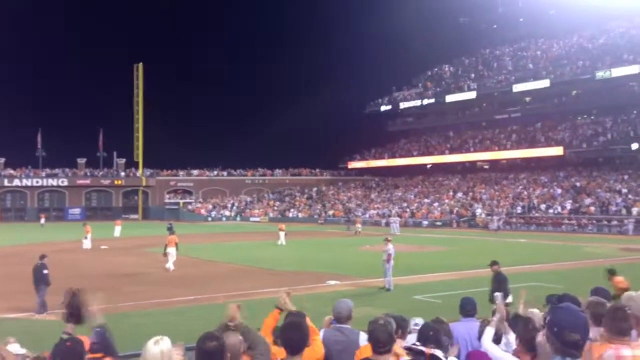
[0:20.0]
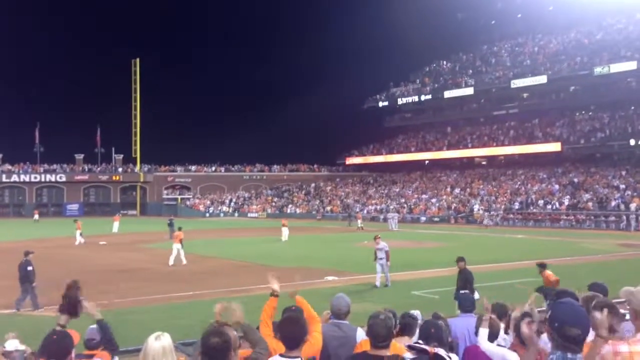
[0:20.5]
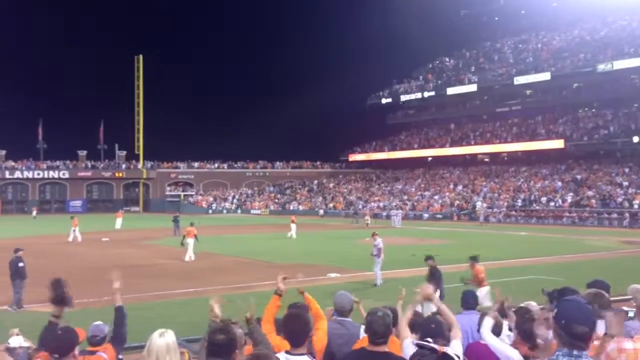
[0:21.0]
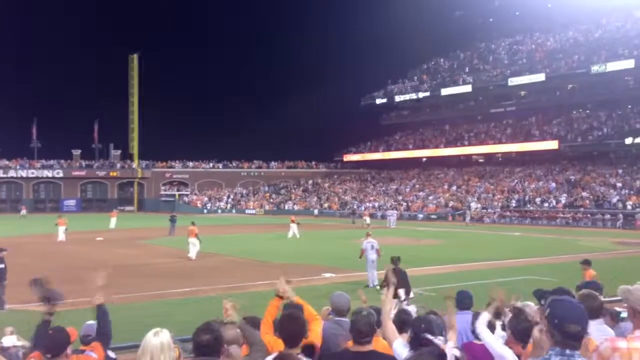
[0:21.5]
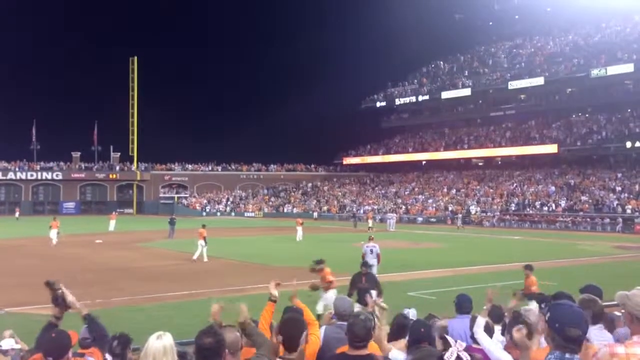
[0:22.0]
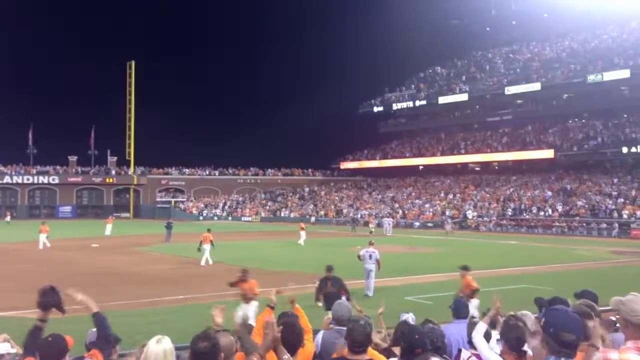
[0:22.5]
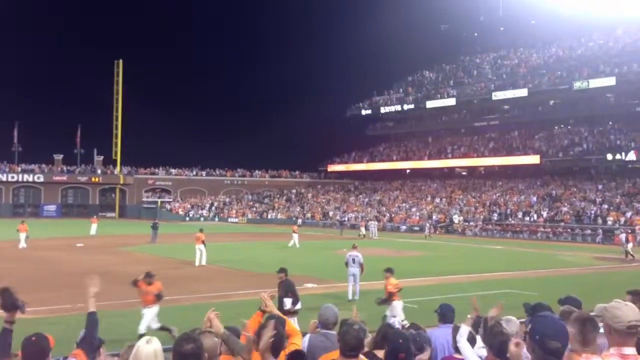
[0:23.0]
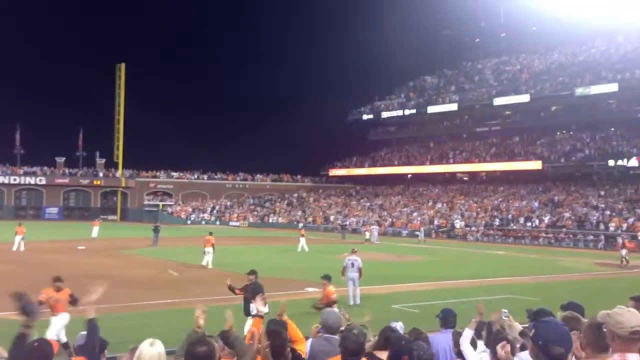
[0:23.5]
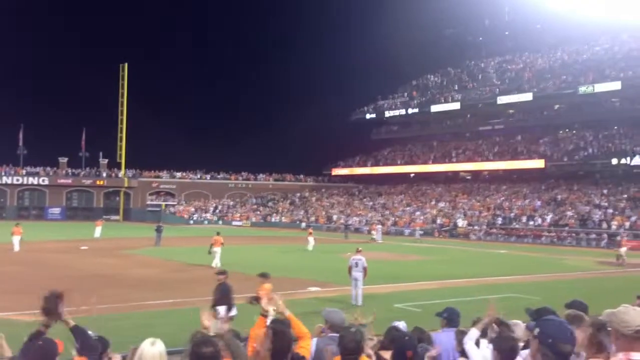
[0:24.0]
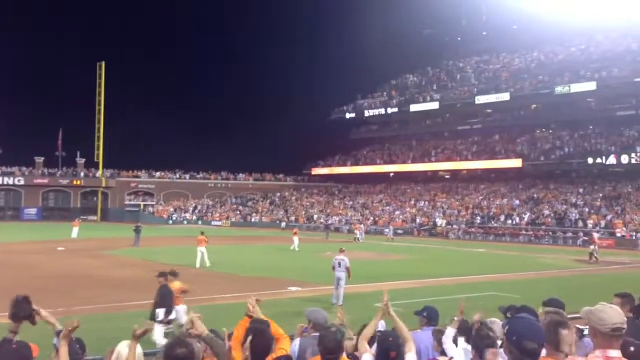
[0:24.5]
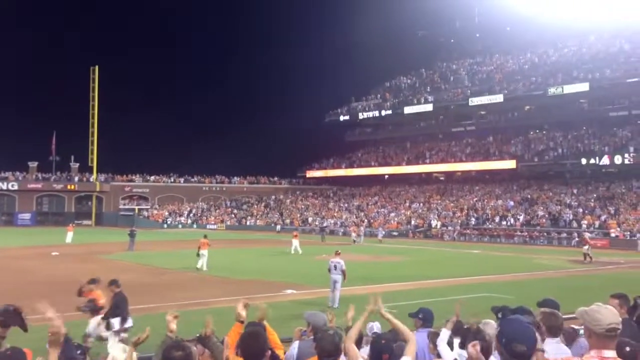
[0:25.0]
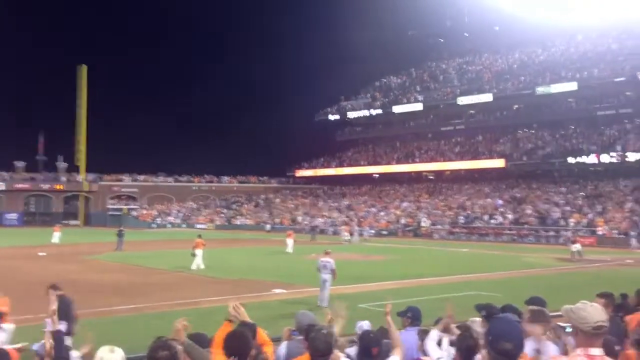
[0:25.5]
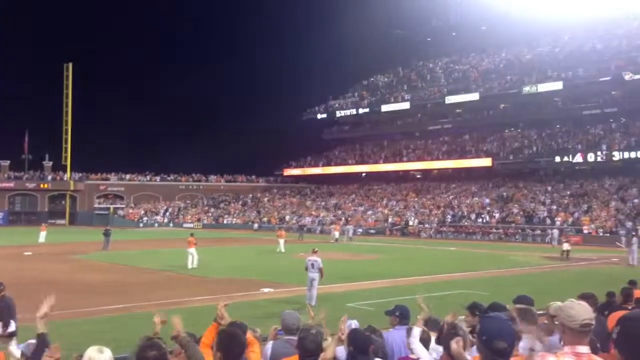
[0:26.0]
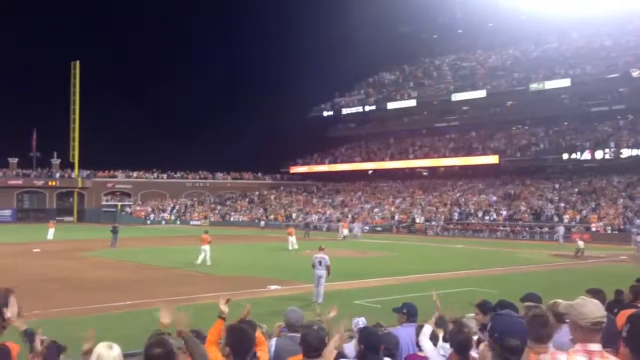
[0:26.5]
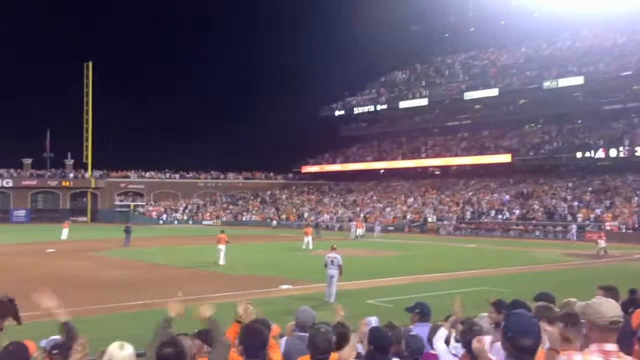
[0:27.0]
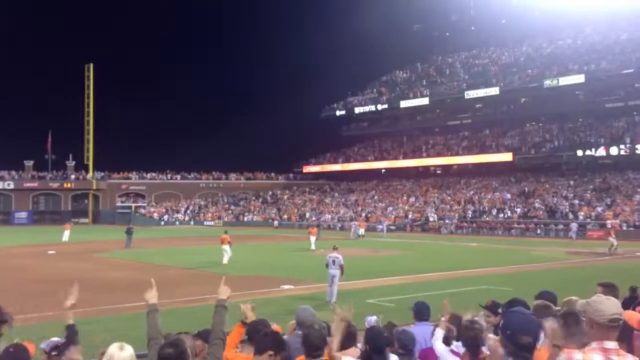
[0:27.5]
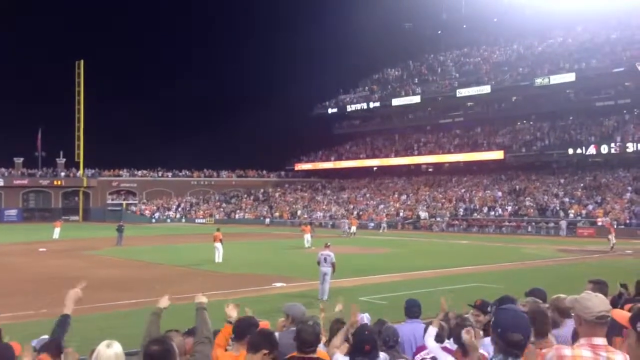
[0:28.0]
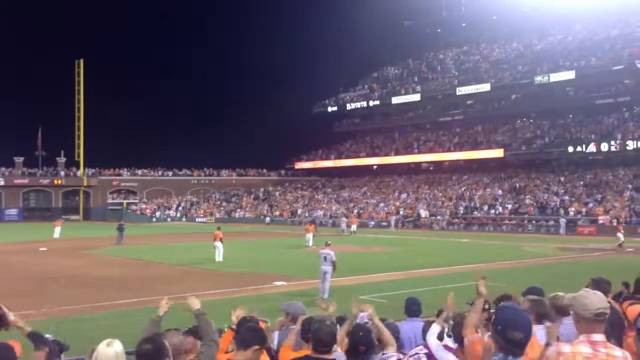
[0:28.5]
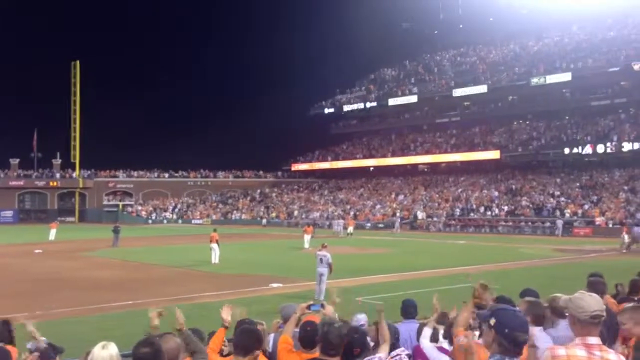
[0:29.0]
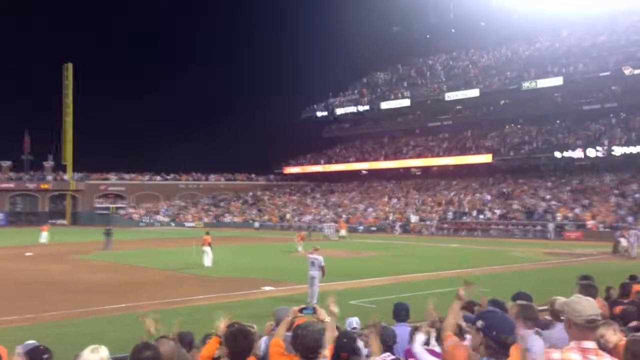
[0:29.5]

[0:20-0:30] People in the crowd wearing orange celebrate with their hands in the air. There is little action on the field: no one is pitching or running, and players just walk around a little. The team in orange seems to be fielding, while the team in white is batting. A new batsman apparently comes up to the plate. The camera covers most of the diamond, and the spot where the batsman stands is toward the right-hand side of the view, sometimes off-screen and sometimes in the middle.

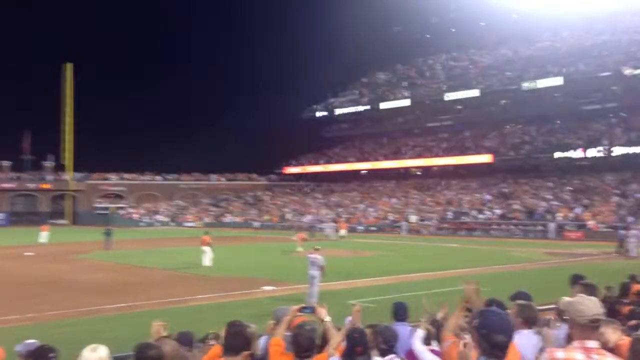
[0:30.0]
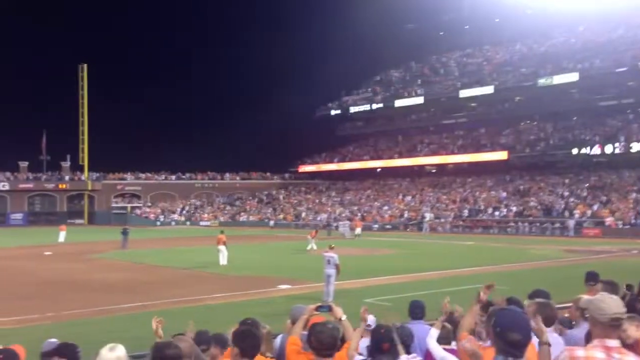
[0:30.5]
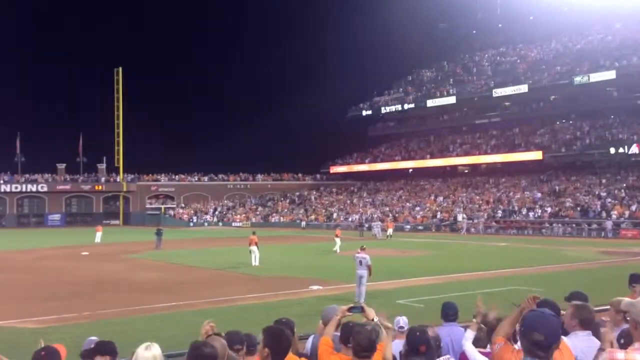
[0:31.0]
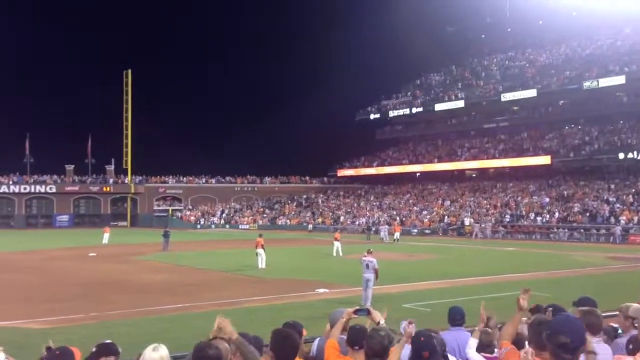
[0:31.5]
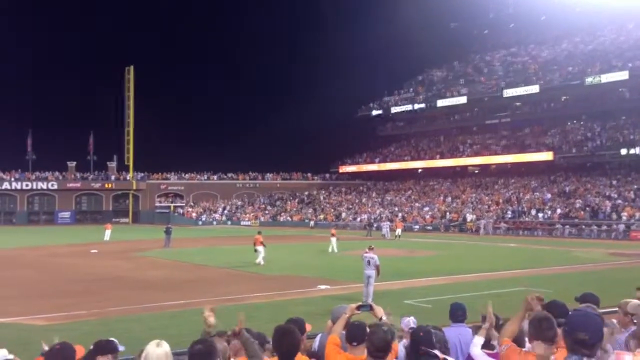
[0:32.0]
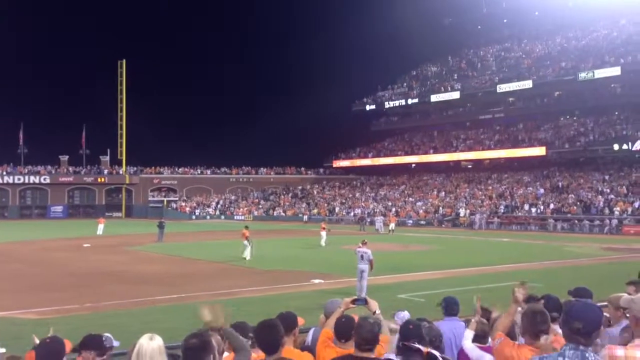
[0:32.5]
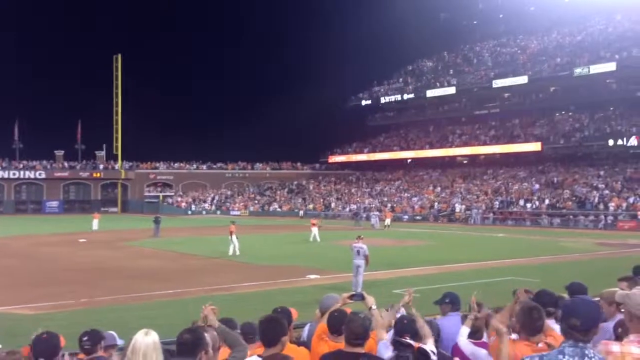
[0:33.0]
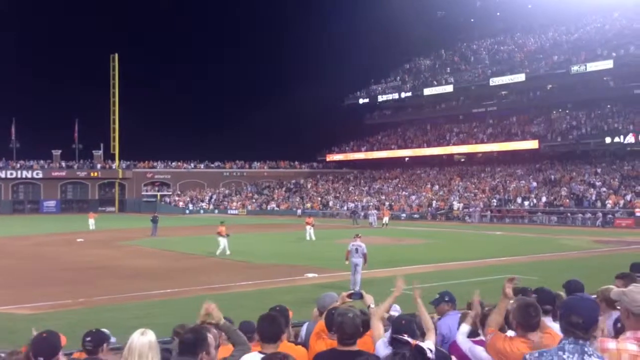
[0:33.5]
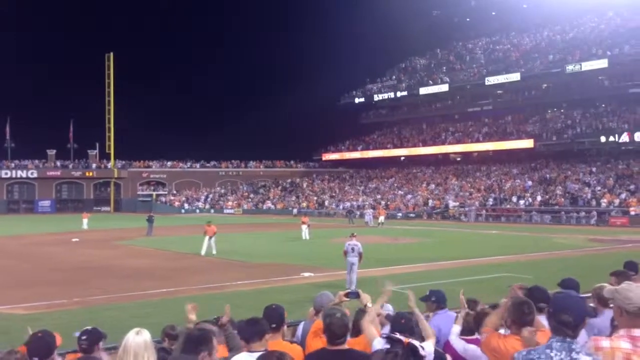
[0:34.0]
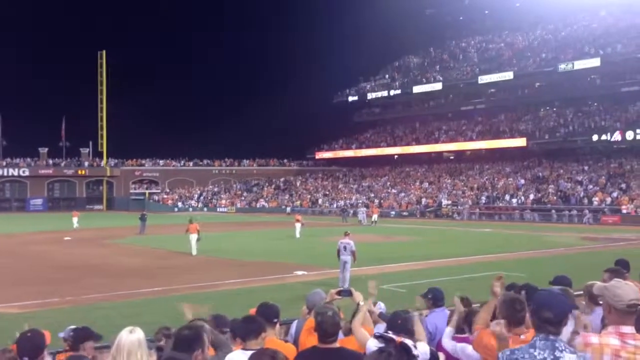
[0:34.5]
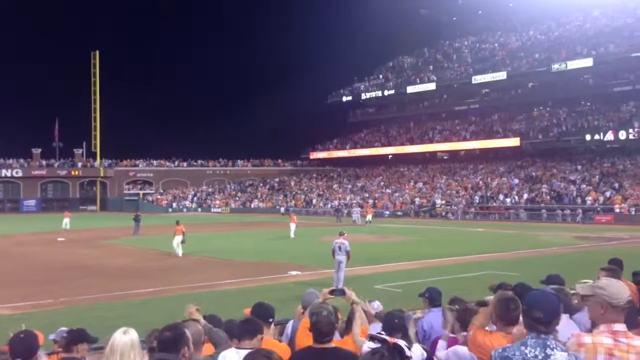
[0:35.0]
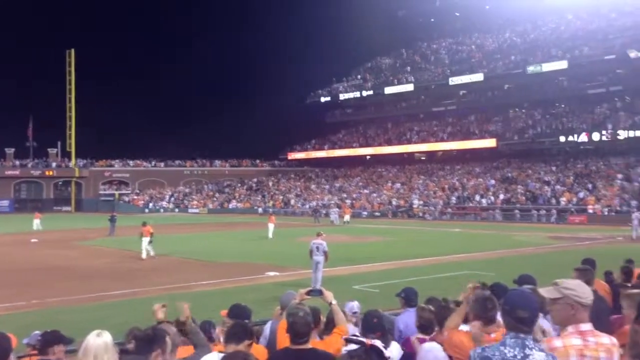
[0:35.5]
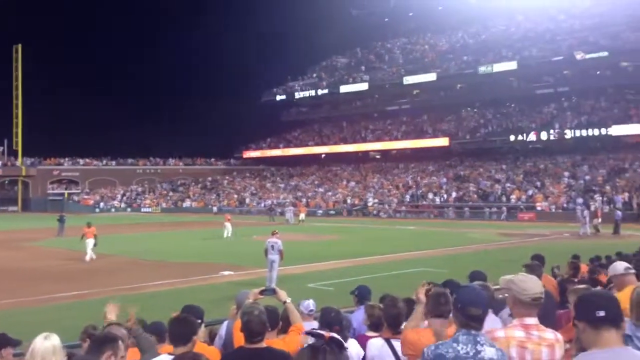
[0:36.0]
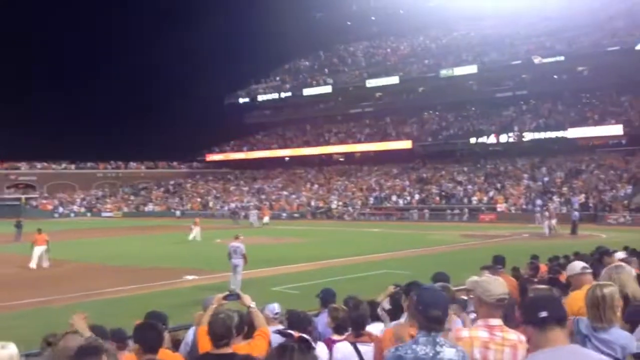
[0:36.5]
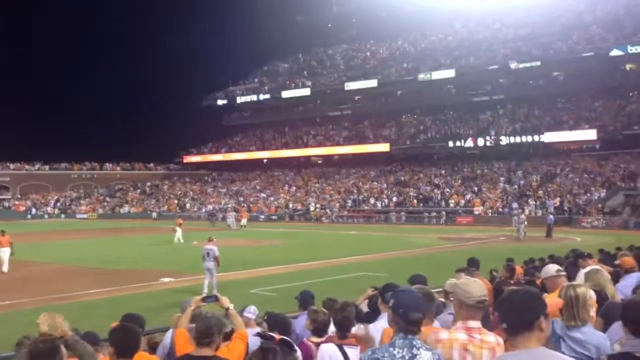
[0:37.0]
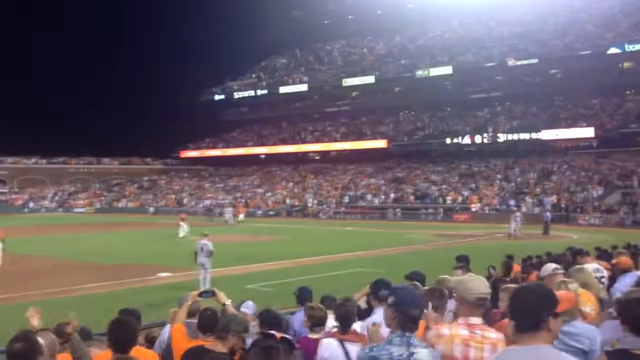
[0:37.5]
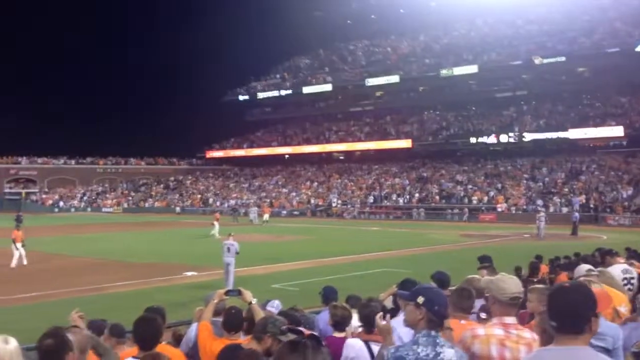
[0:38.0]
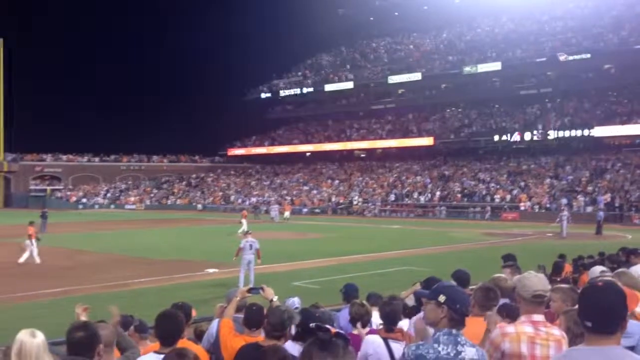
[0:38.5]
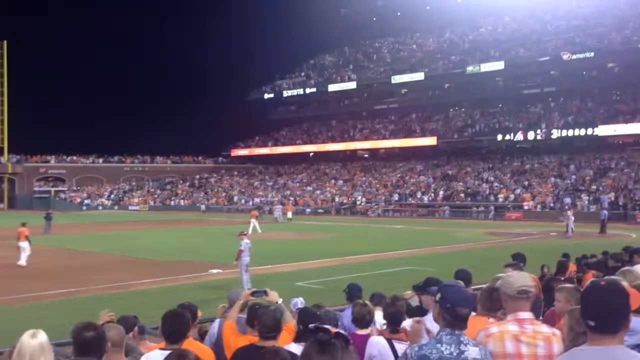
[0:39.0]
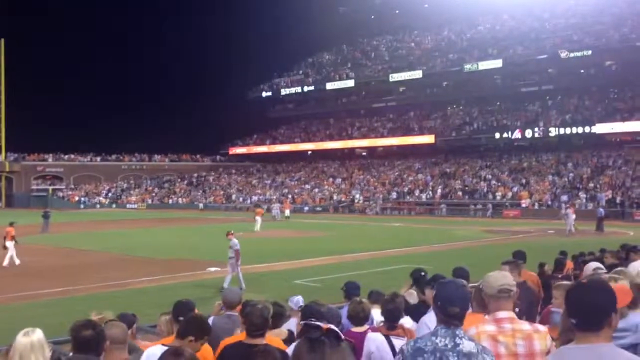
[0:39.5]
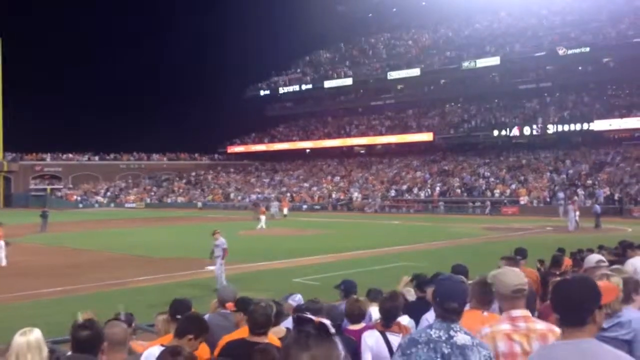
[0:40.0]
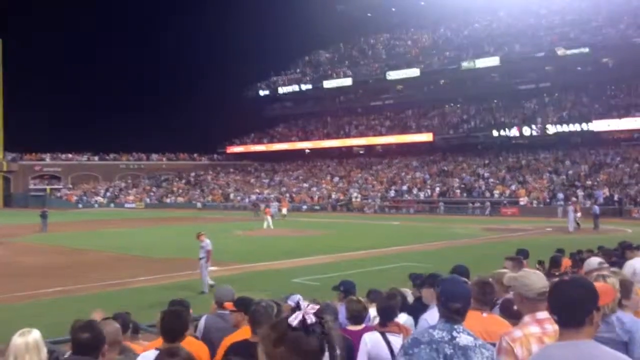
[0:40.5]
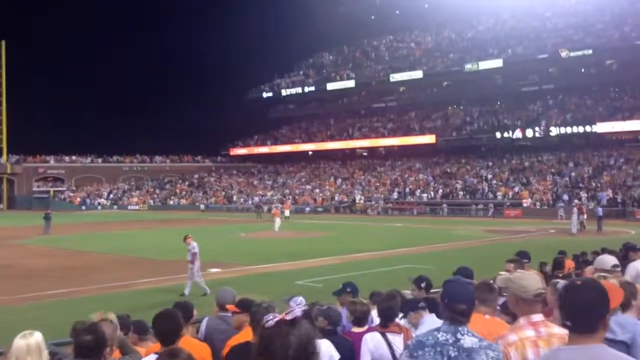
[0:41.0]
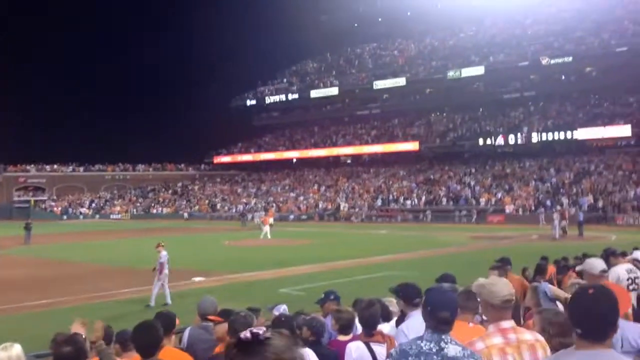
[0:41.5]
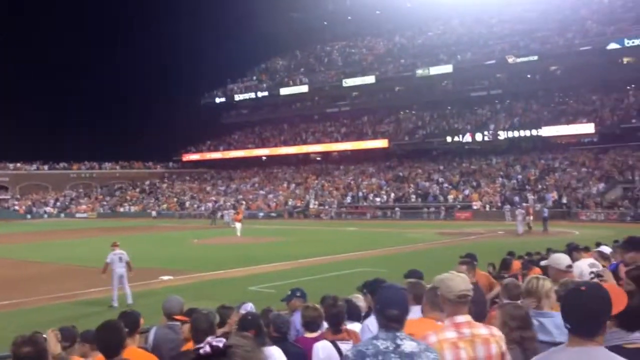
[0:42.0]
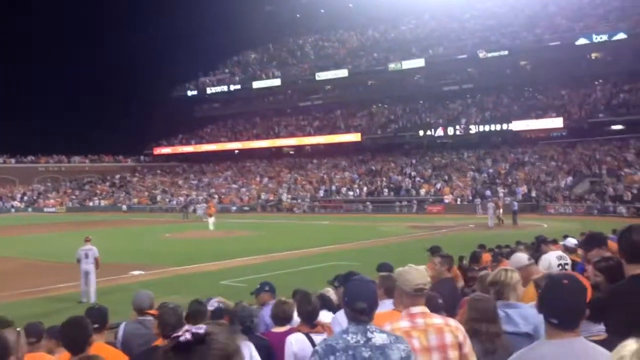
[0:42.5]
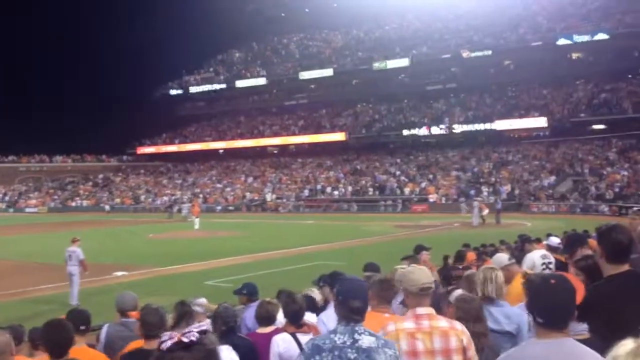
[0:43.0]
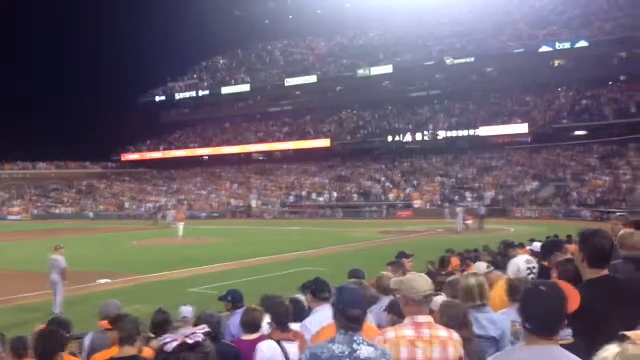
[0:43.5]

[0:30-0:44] There is still little play on the field, and people in the crowd are still clapping with their hands in the air. The pitcher moves to the mound and looks about to pitch to the batter, who looks ready to bat. There is some advertising in the stands. In the near part of the view, the backs of a few people in the crowd are visible. In the distance, on the other side of the field, there is a stand with three levels, and between the levels are horizontal lit advertising boards, one orange and the others white.